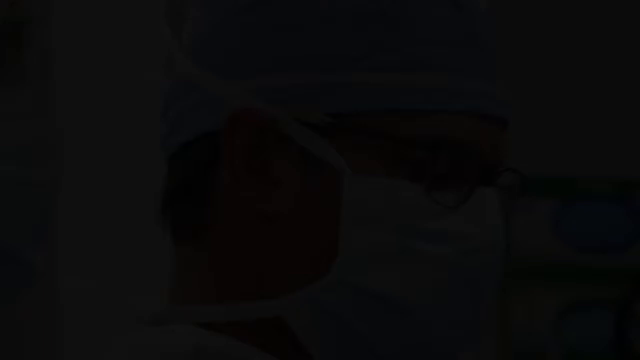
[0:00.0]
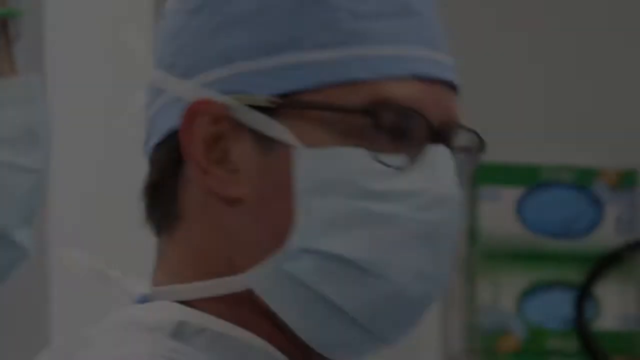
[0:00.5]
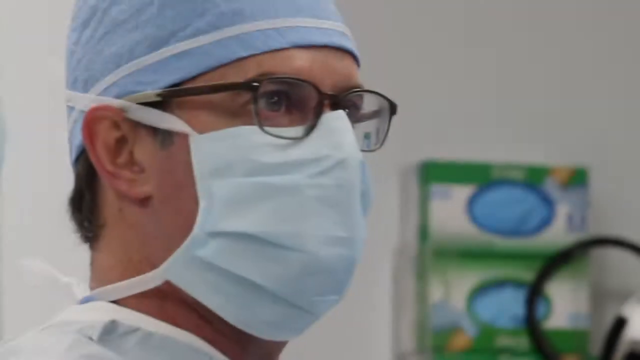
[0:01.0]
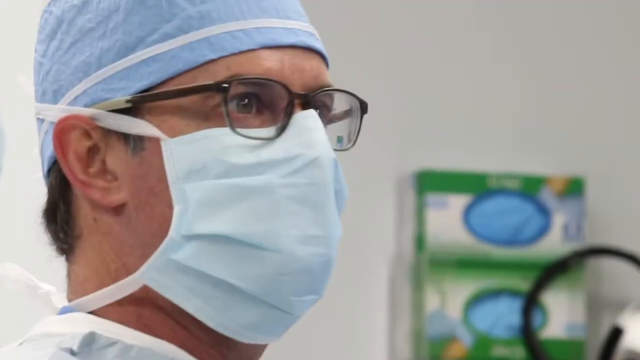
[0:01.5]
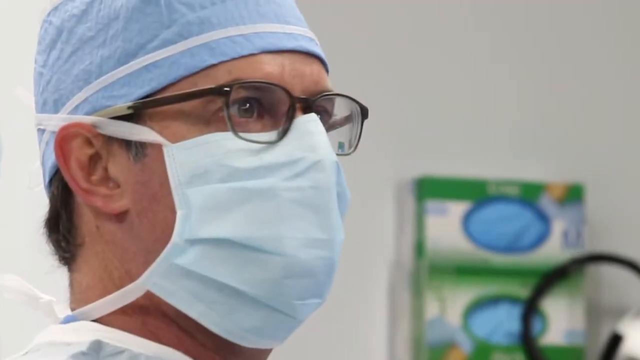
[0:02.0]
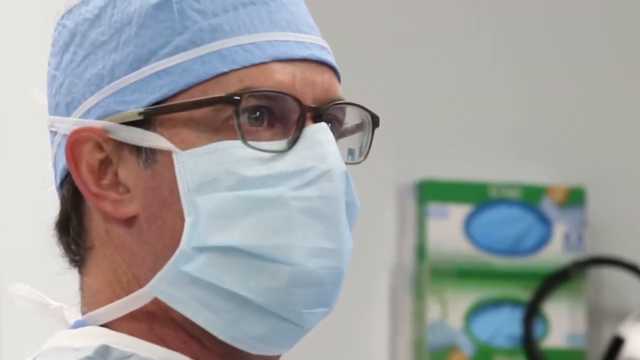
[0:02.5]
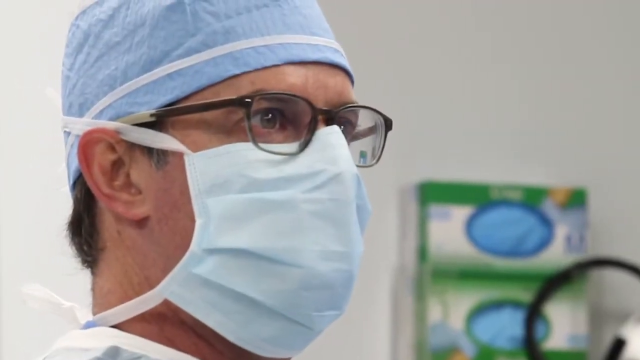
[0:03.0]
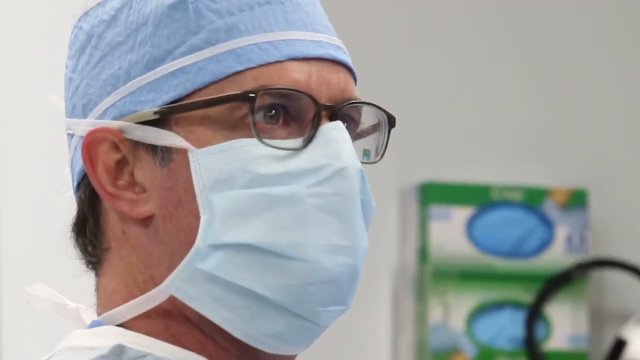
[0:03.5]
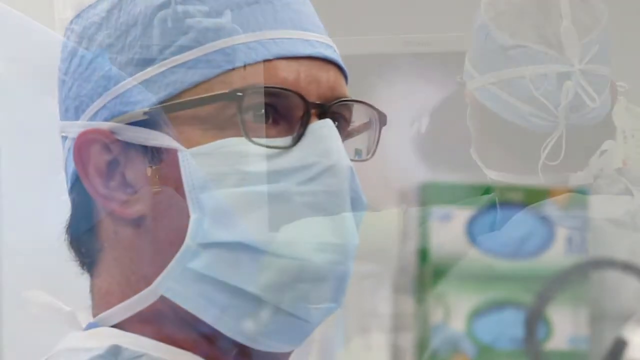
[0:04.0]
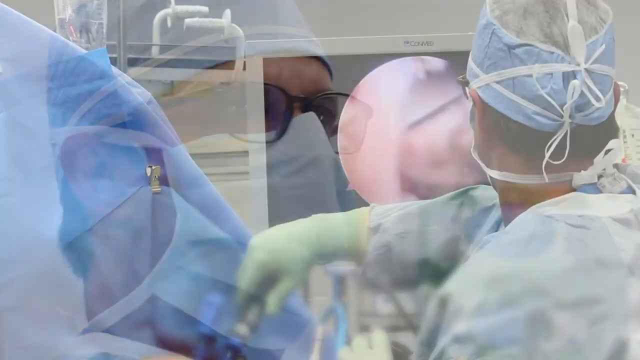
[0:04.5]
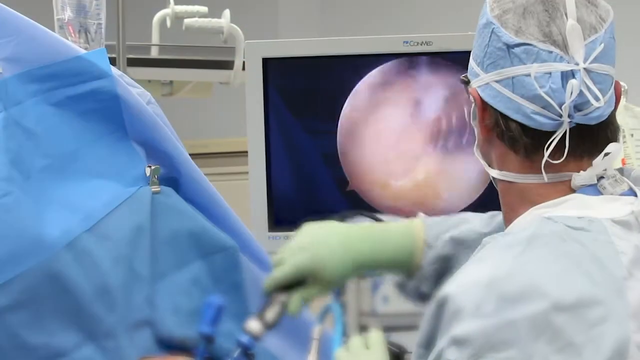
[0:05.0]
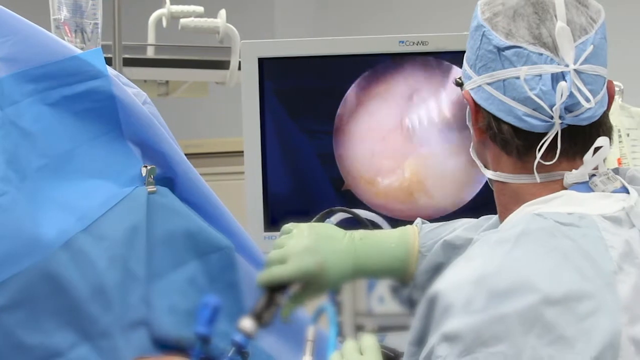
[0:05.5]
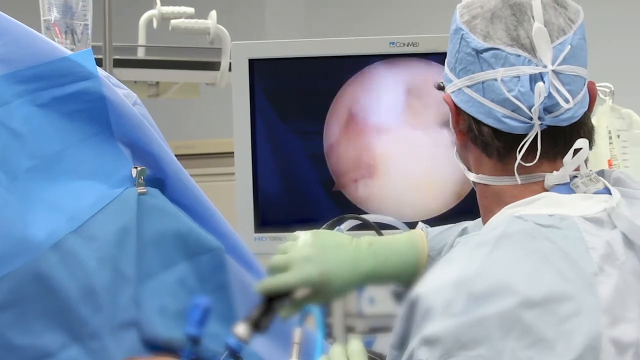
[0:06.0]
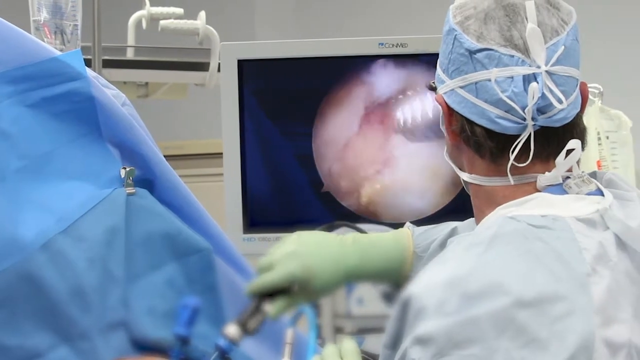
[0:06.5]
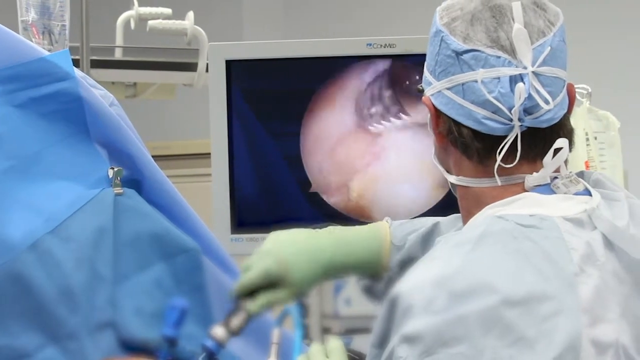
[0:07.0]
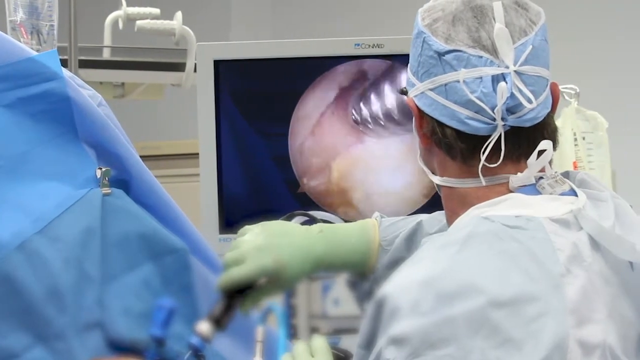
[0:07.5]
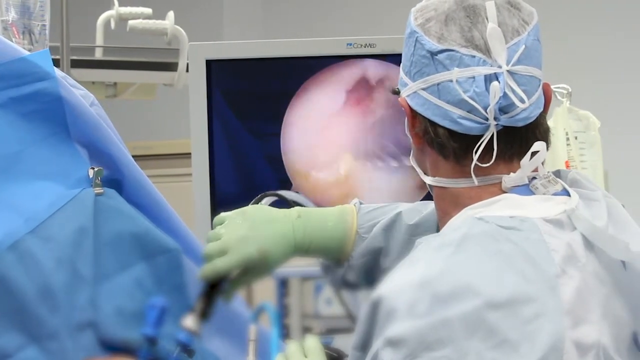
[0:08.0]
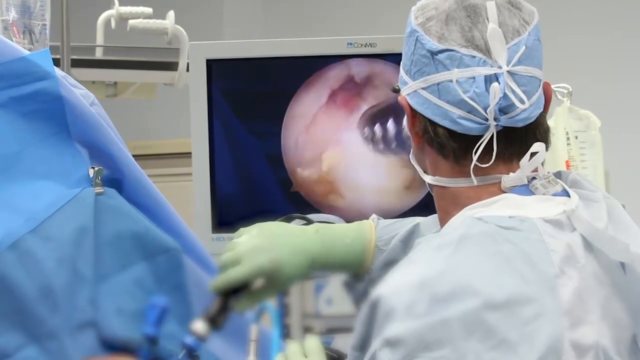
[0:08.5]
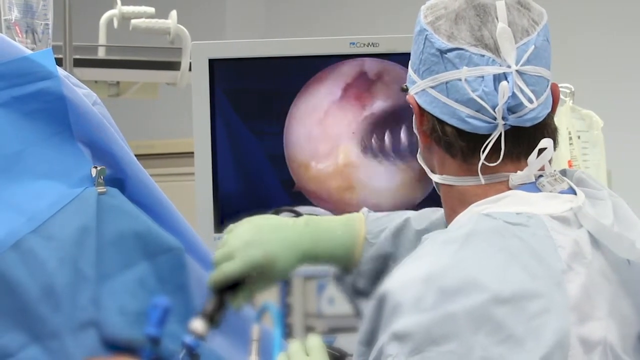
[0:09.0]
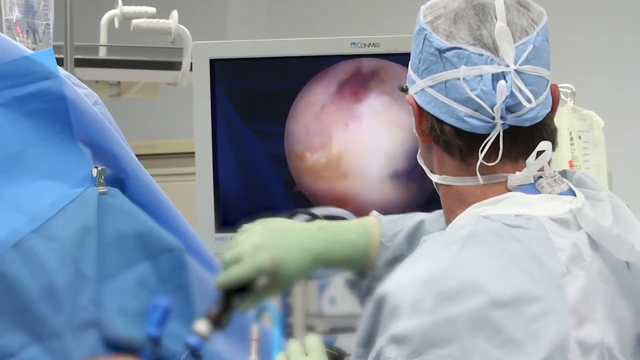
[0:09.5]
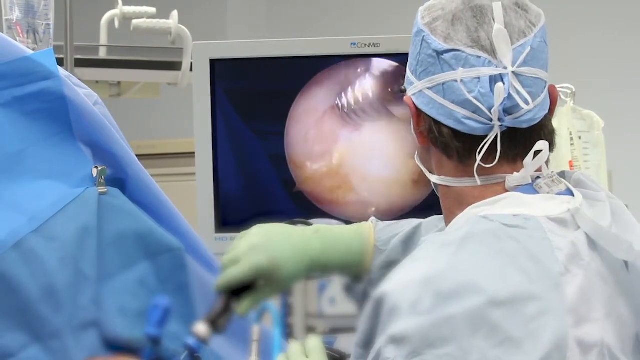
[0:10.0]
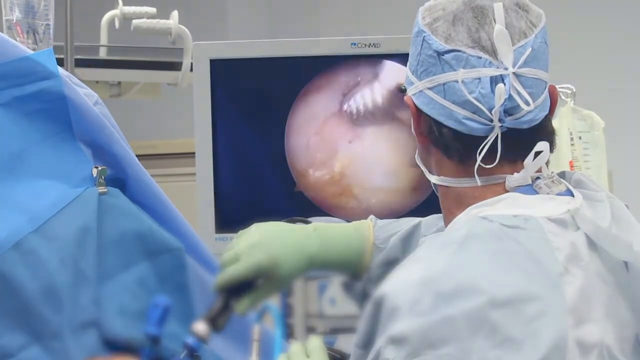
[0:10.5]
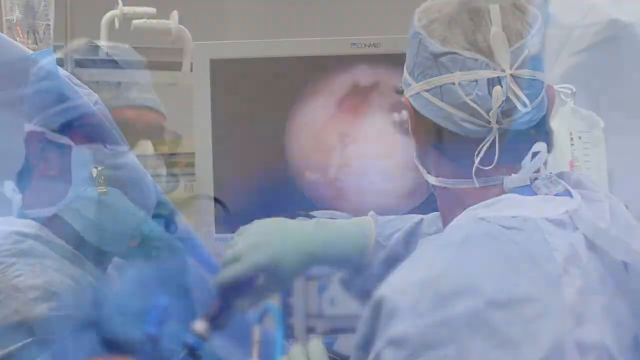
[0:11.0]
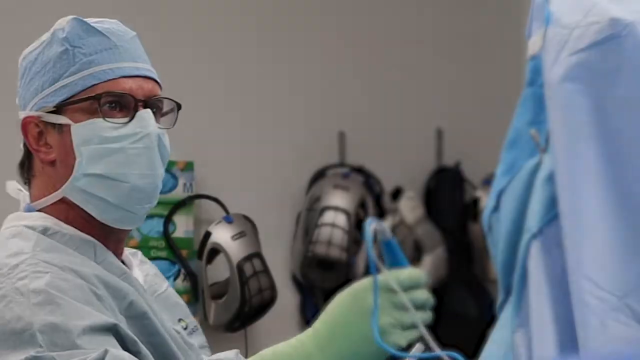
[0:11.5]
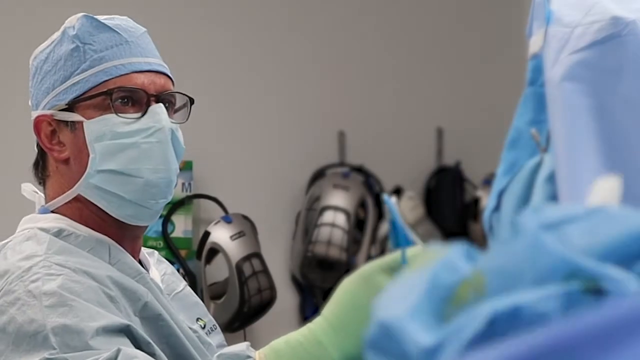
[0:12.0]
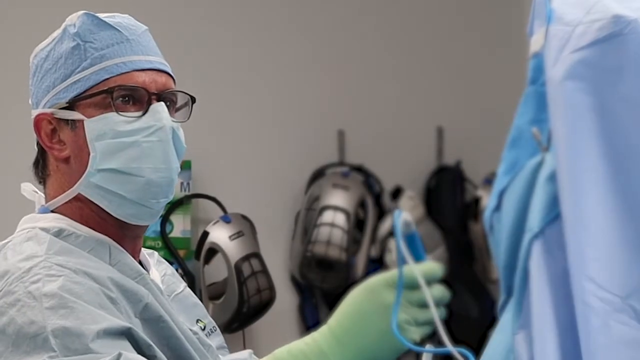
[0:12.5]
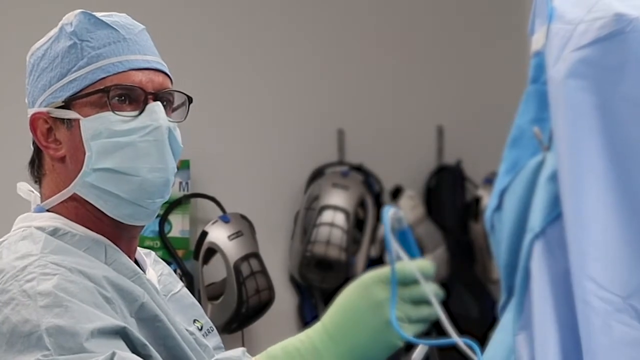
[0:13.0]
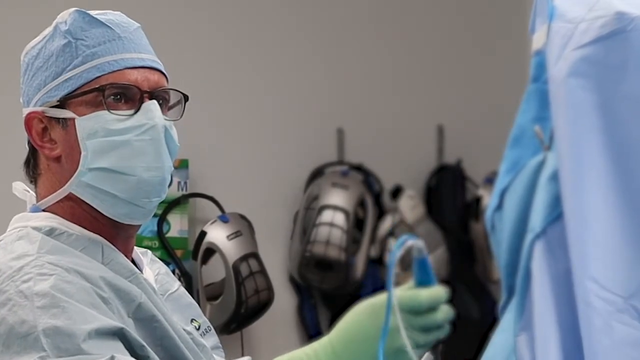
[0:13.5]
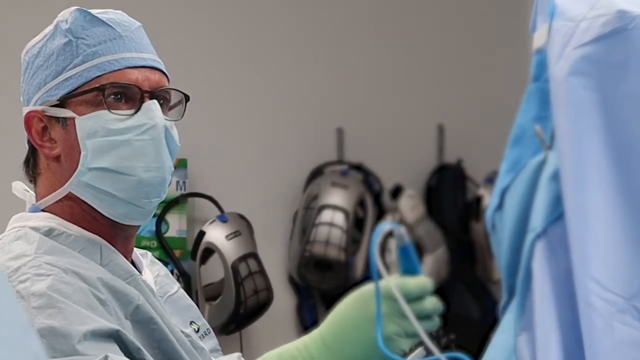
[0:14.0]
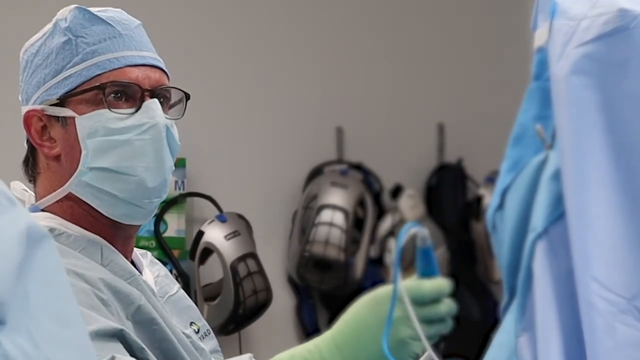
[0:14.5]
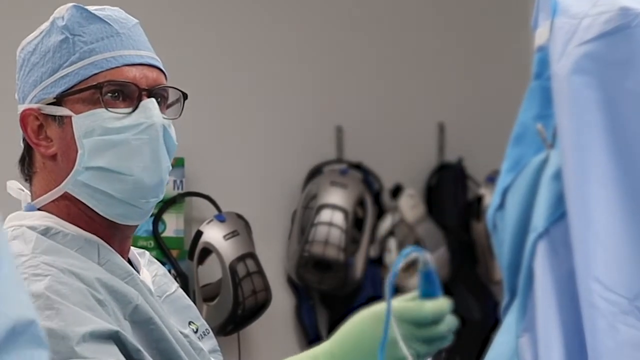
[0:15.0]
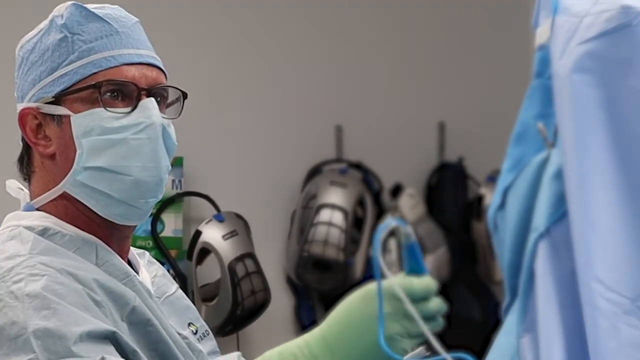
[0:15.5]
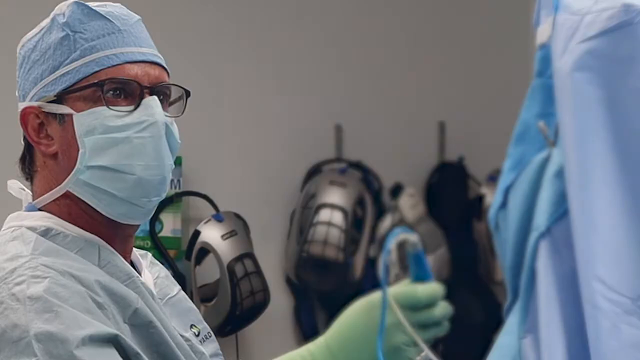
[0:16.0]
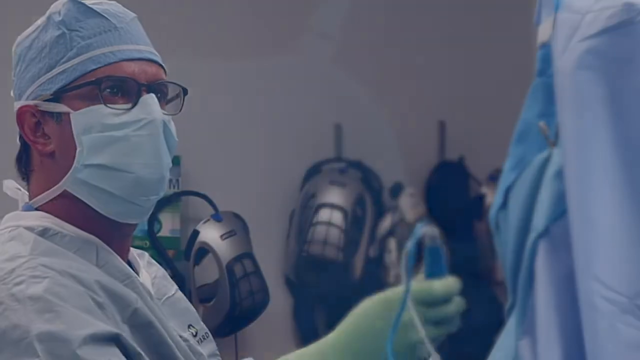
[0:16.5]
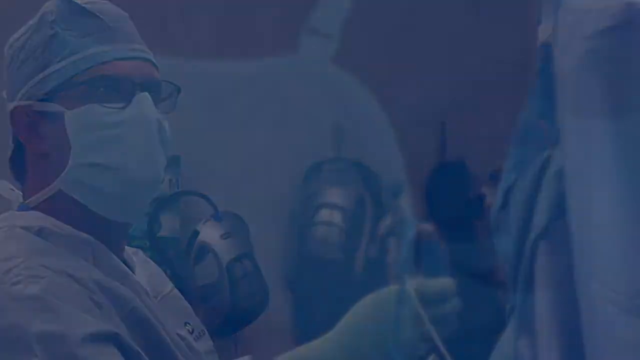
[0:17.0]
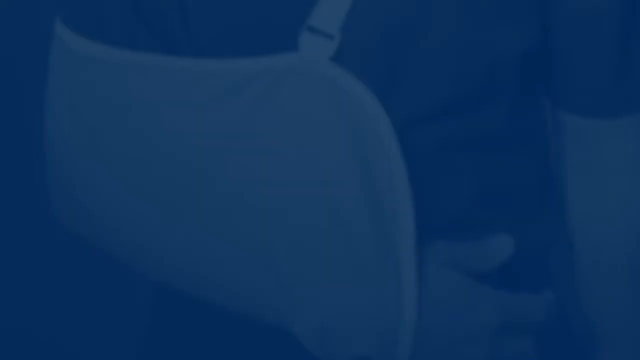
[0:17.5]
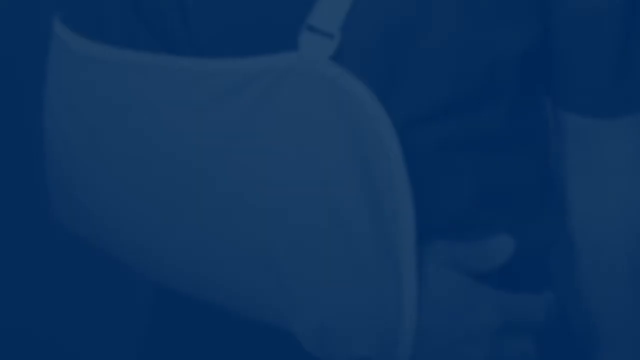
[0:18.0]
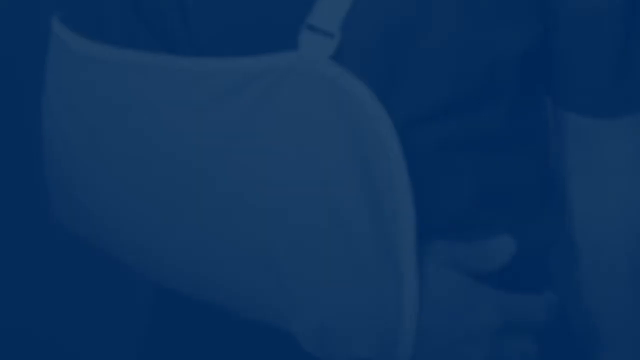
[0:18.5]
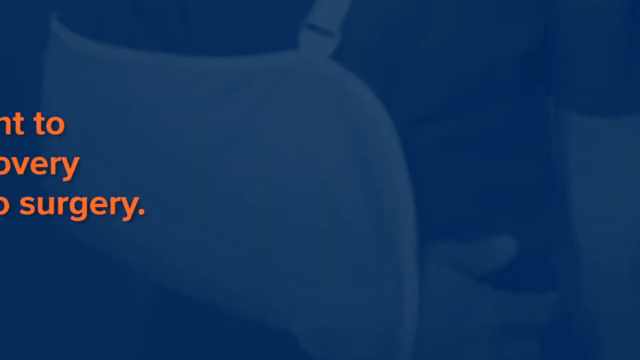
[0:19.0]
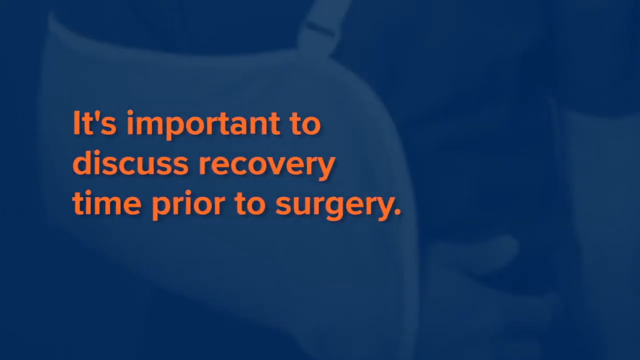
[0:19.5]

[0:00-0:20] A doctor who appears to be a surgeon is in an operating room. He has a blue cap covering his hair, brown wire-rimmed glasses, and a face mask covering his nose and mouth. He looks out toward the right side of the frame, seemingly at a monitor in the room, and it becomes clear that he is indeed looking at a monitor that lets him perform the procedure and see more precisely. He uses a probe inside the patient, moving it around in a circular motion as he stares at the monitor with an intense look on his face. Next, a silhouette of a person wearing a brace on their right arm appears, and the words "it's important to discuss recovery time prior to surgery" appear on the screen in orange letters.